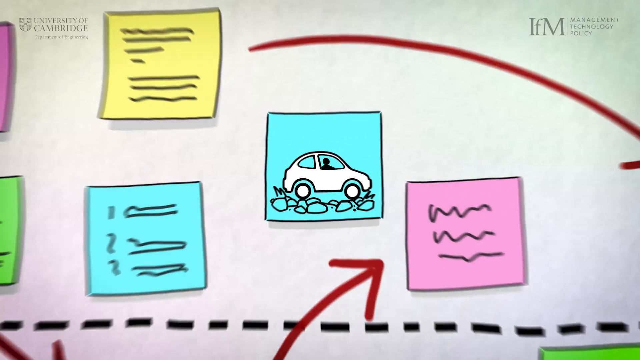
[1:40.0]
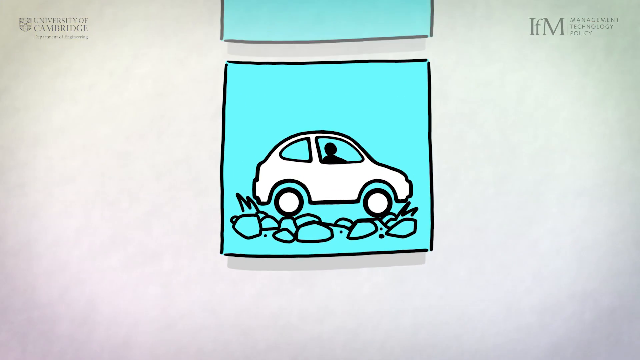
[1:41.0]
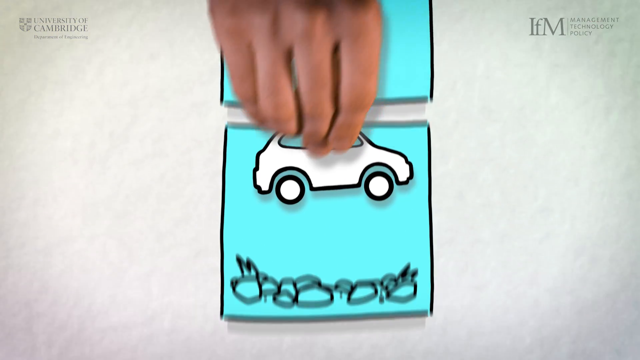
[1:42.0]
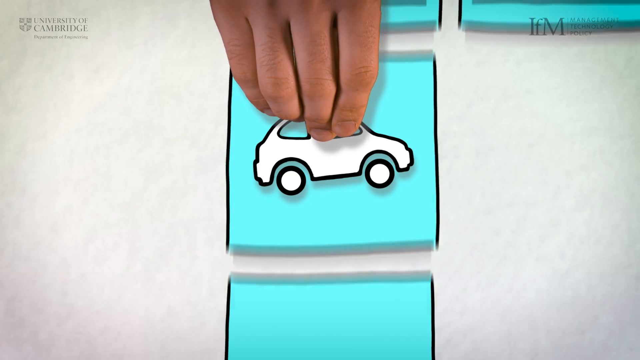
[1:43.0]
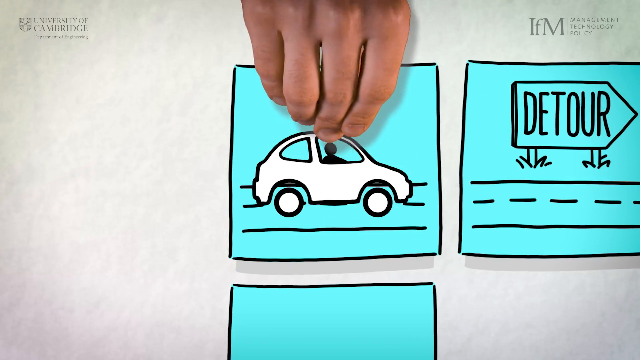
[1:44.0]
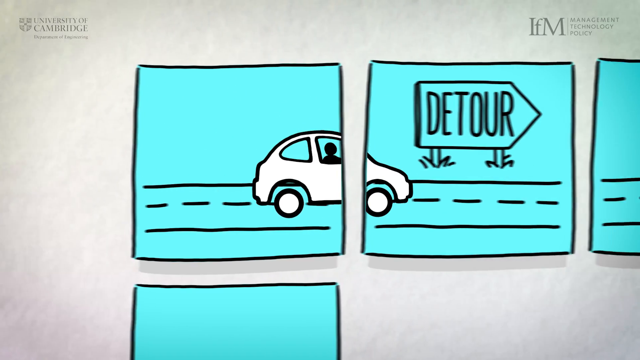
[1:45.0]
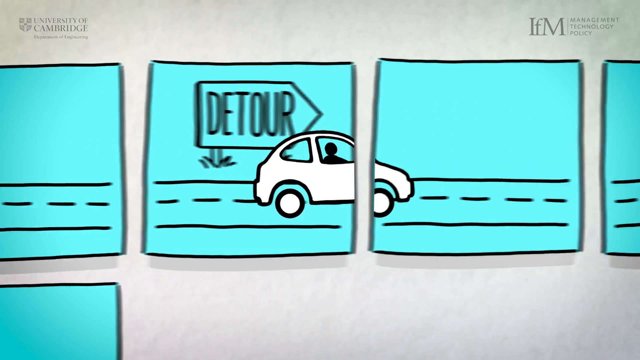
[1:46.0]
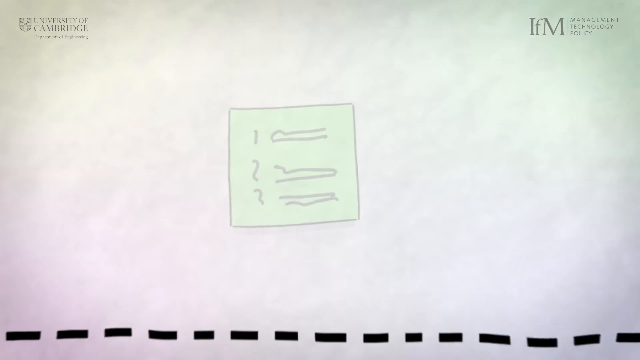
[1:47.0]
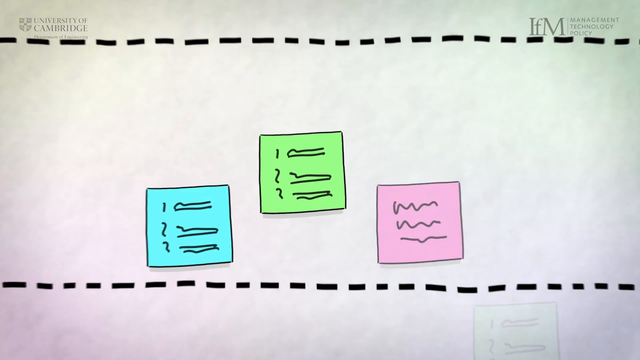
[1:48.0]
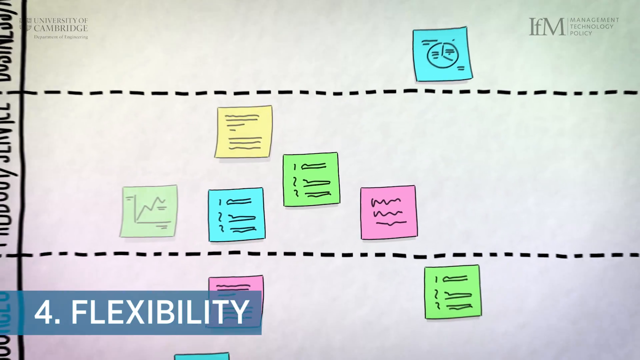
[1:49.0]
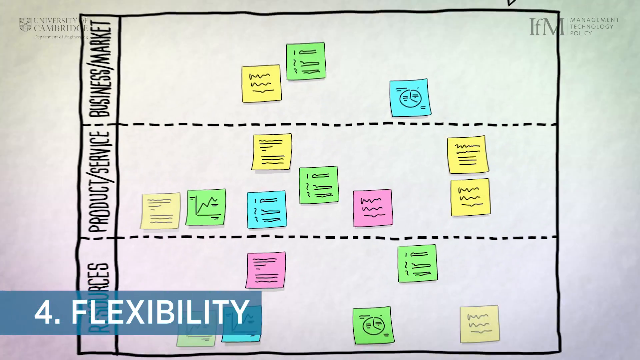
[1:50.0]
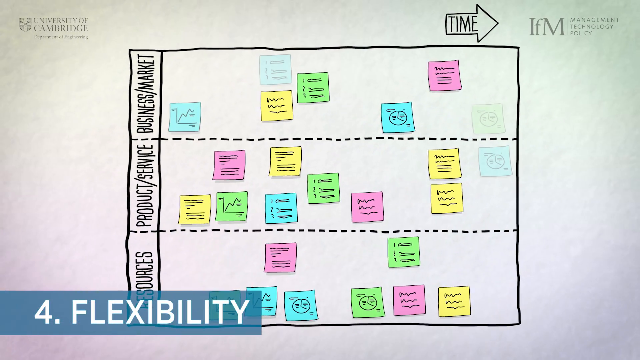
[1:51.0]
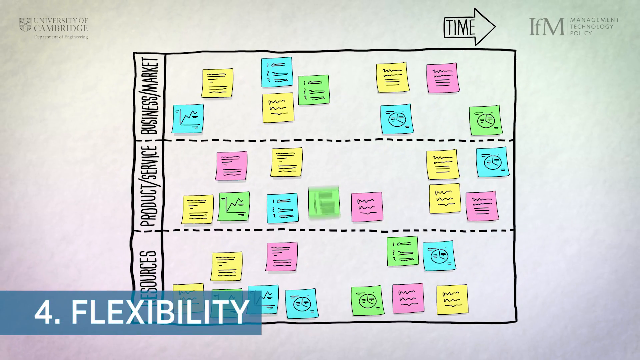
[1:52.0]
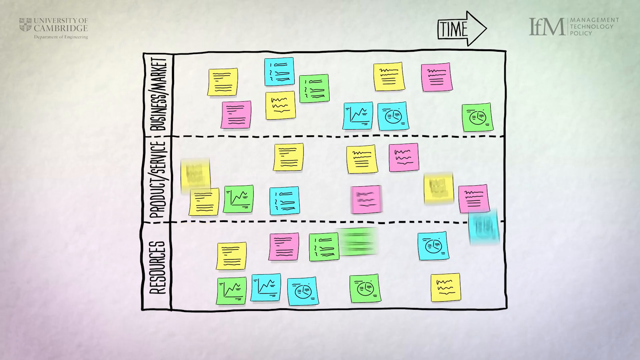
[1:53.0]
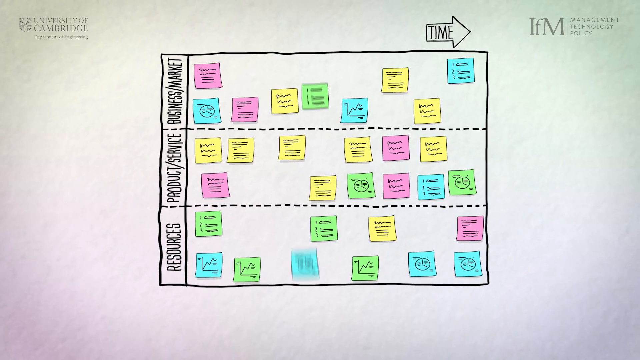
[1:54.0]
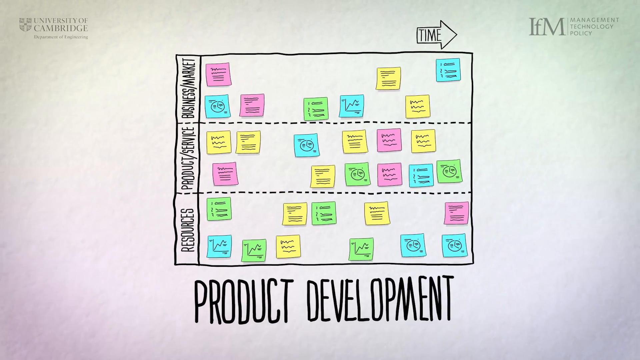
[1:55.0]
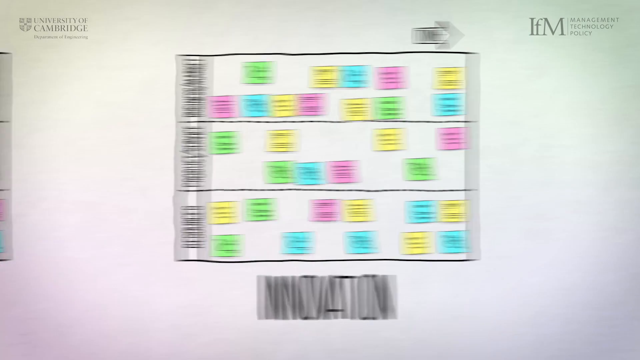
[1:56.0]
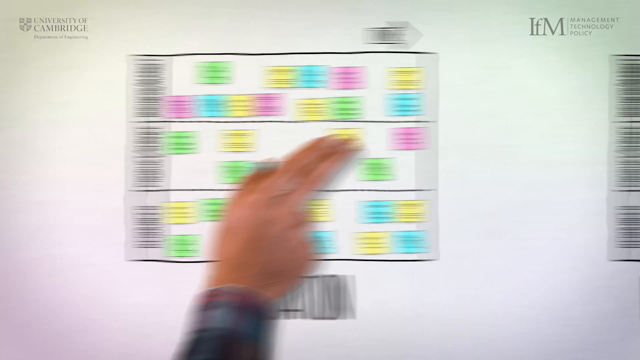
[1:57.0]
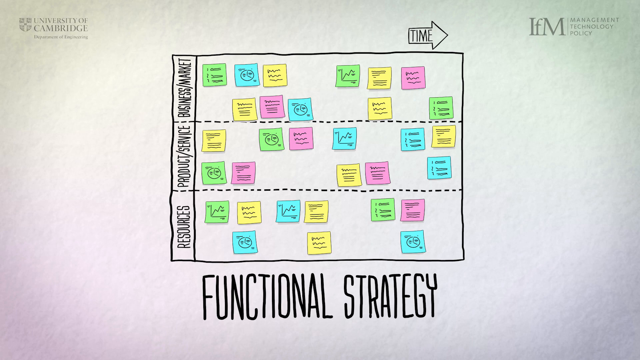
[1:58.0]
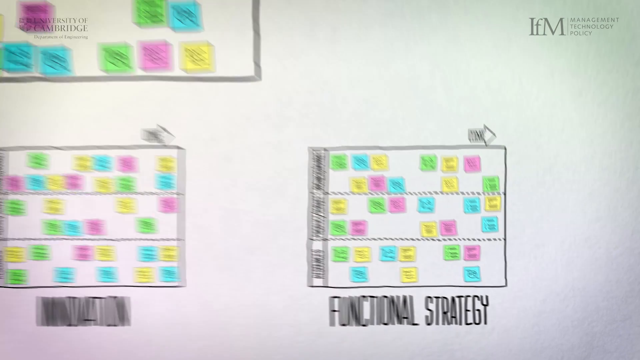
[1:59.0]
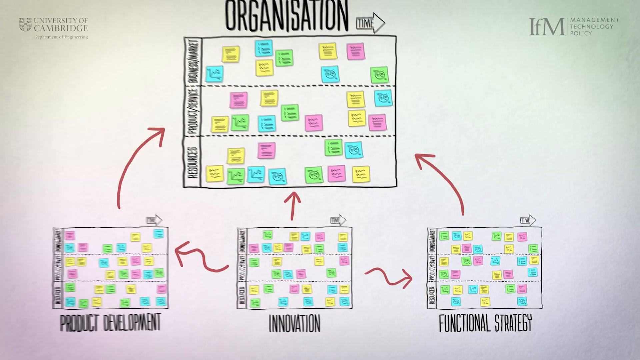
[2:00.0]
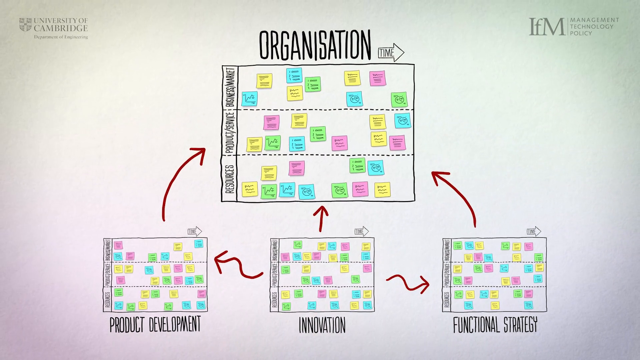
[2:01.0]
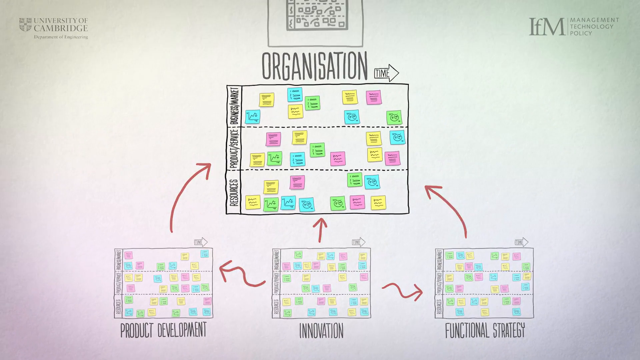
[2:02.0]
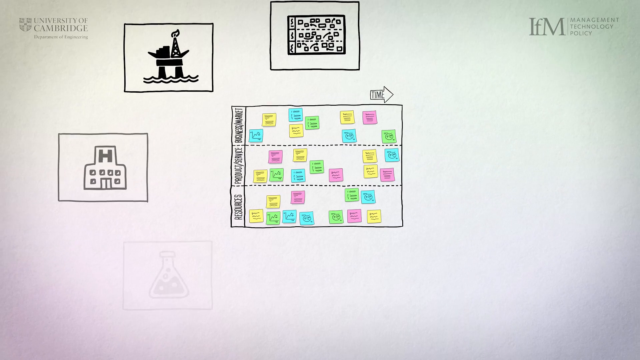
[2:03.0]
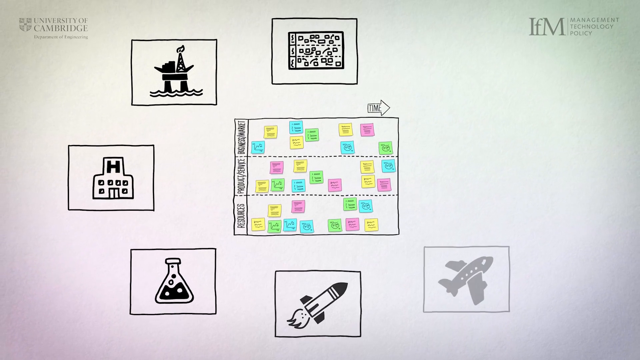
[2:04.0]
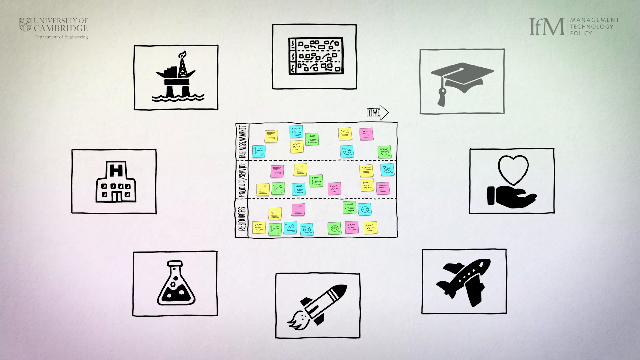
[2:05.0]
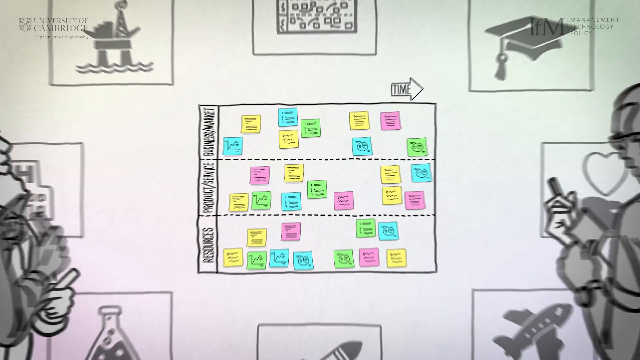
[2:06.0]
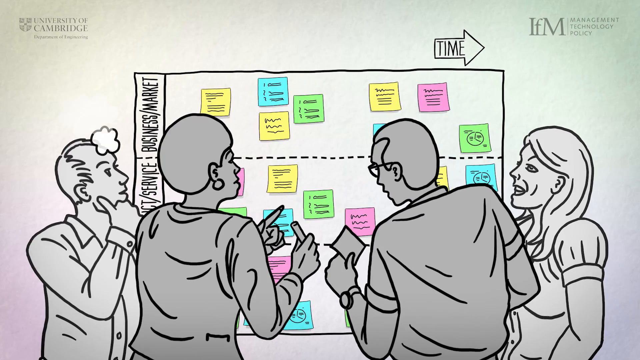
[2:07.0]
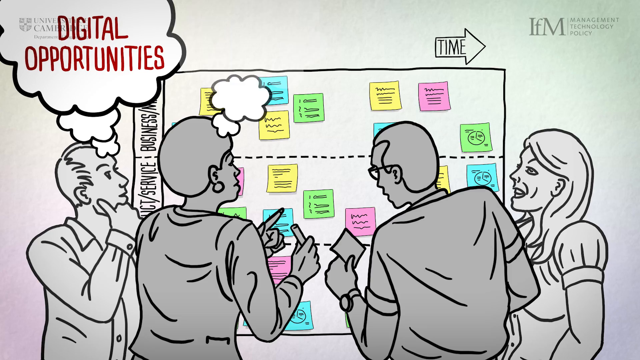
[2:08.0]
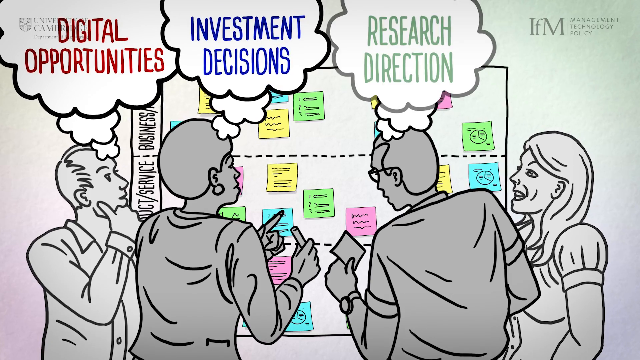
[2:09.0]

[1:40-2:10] The collage appears, and the camera zooms in on one highlighted blue Post-it note showing the car that fell off a cliff, now damaged. The video mixes animation with real footage. A human hand reaches into the frame, picks up the cartoon car off the Post-it note, and brings it back up to the top of one of the Post-it notes where a road is drawn. The car drives on this road, which is highlighted as a detour.